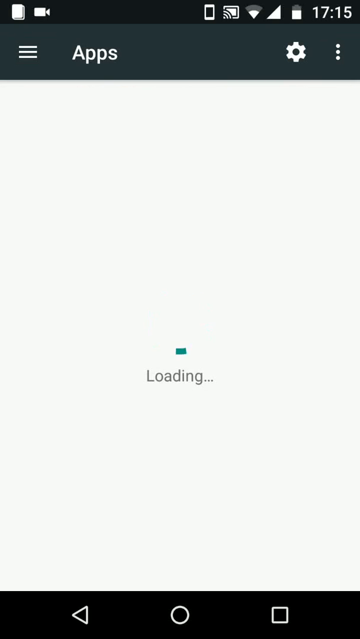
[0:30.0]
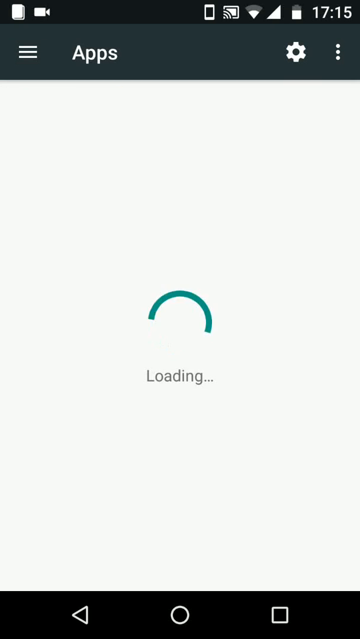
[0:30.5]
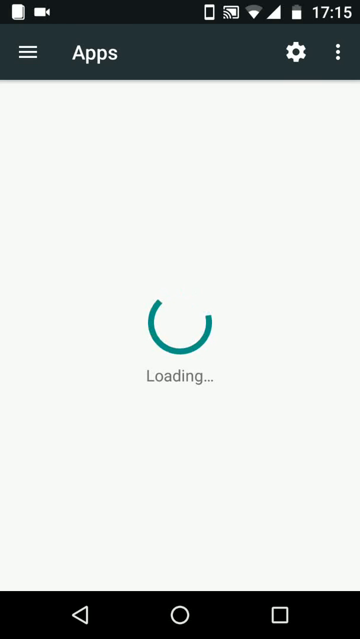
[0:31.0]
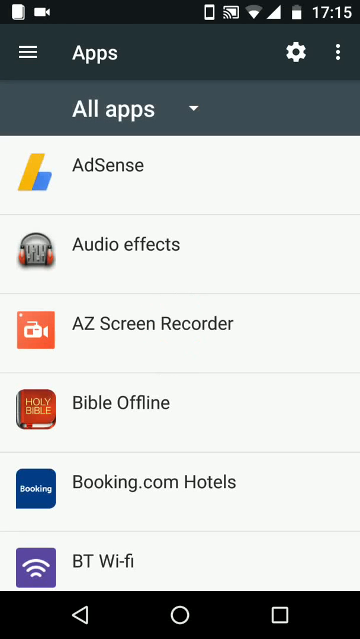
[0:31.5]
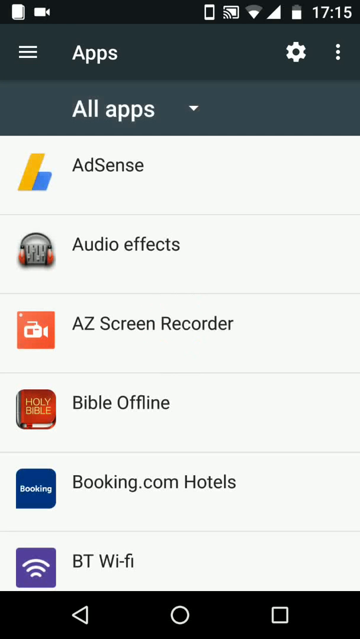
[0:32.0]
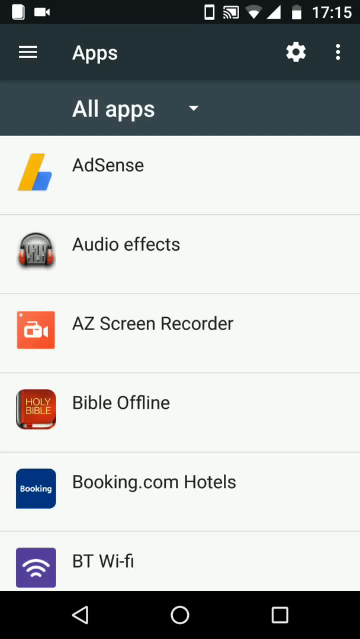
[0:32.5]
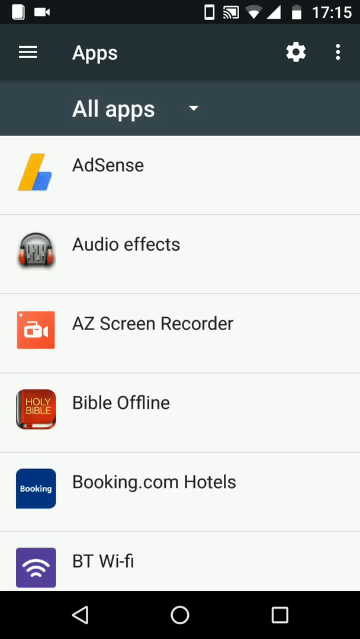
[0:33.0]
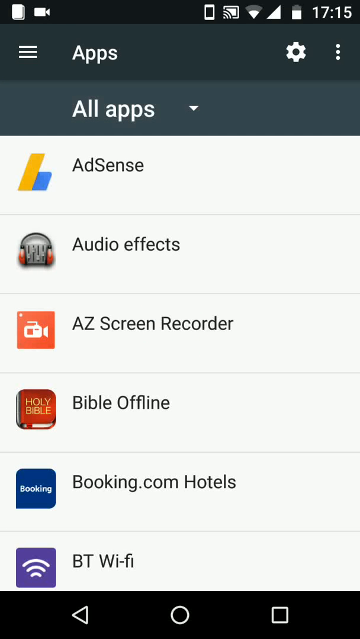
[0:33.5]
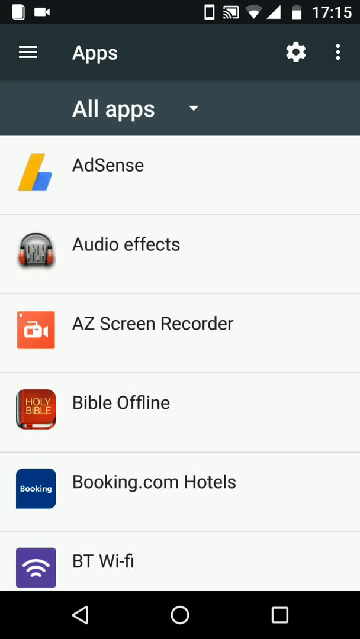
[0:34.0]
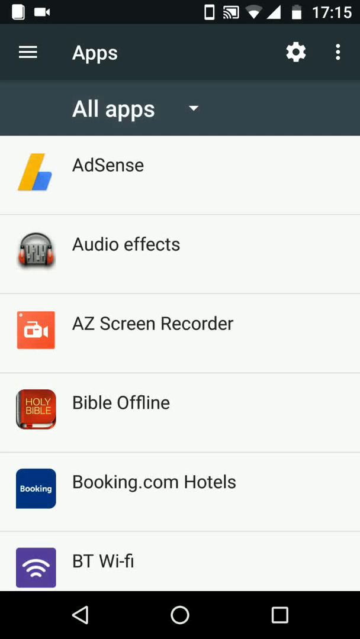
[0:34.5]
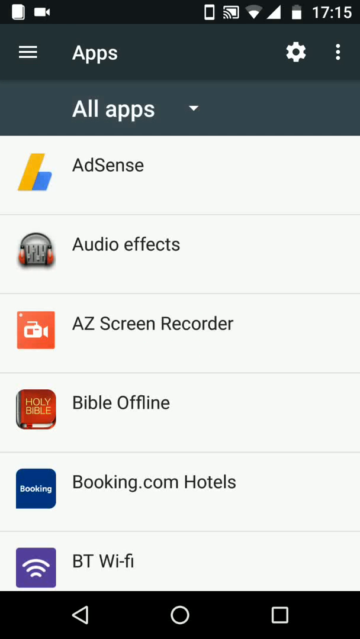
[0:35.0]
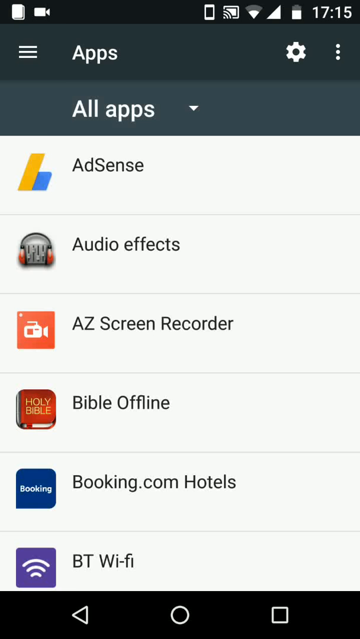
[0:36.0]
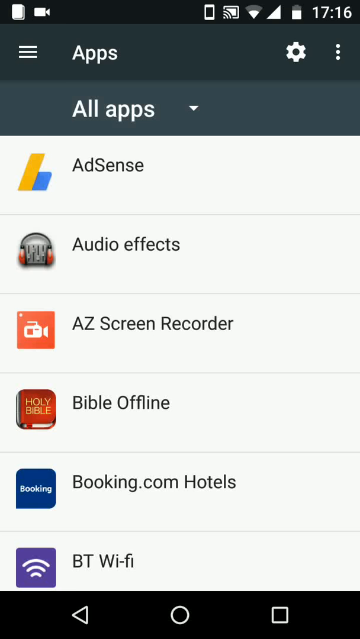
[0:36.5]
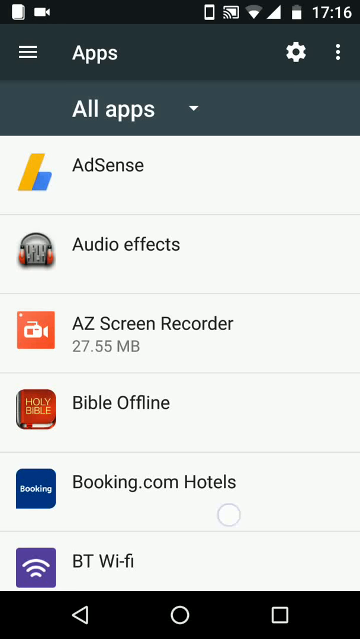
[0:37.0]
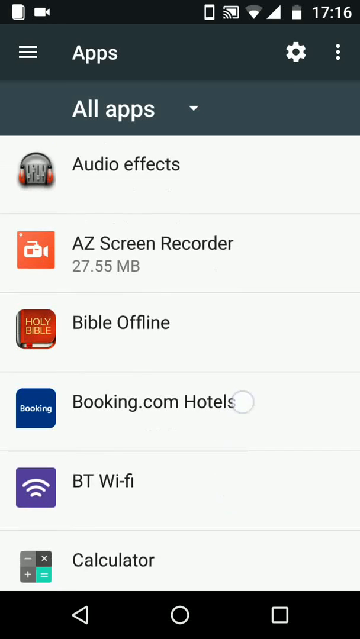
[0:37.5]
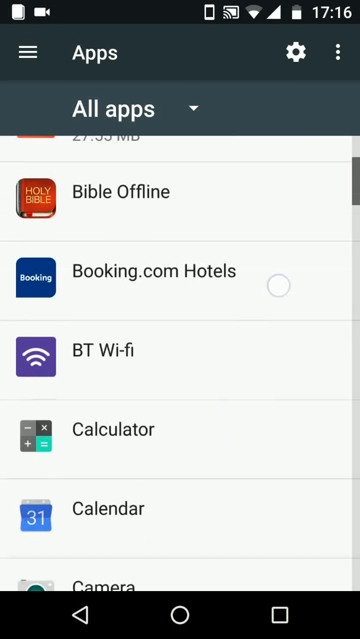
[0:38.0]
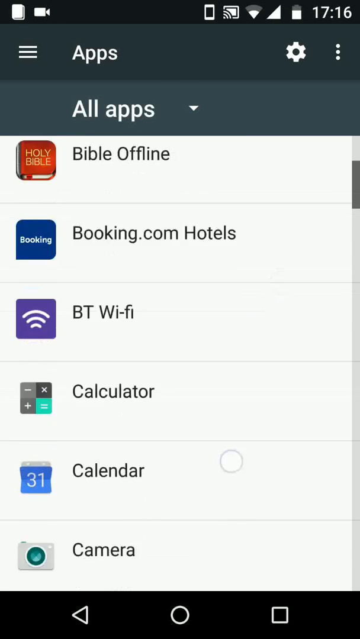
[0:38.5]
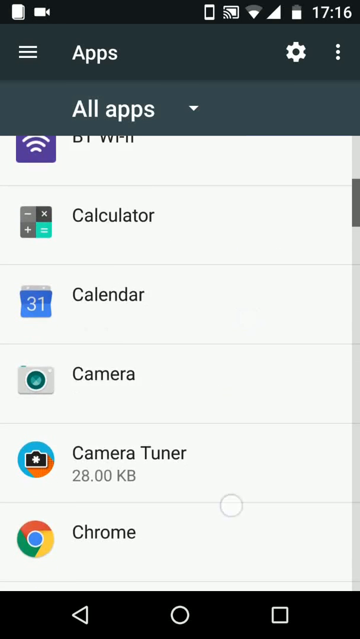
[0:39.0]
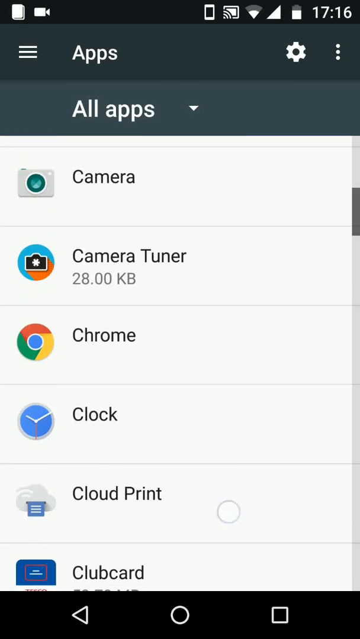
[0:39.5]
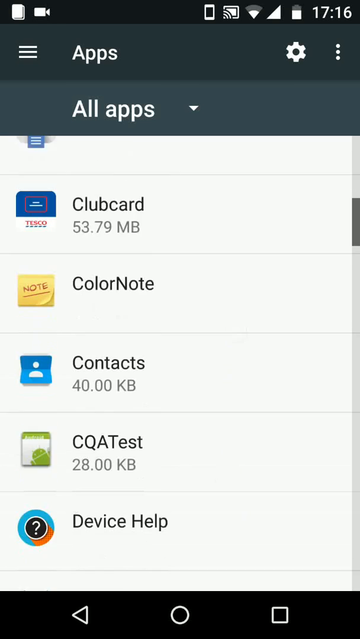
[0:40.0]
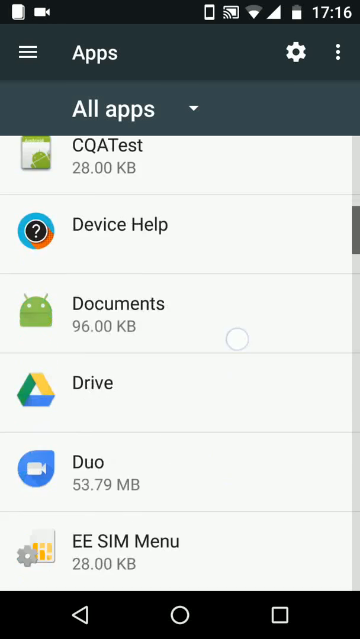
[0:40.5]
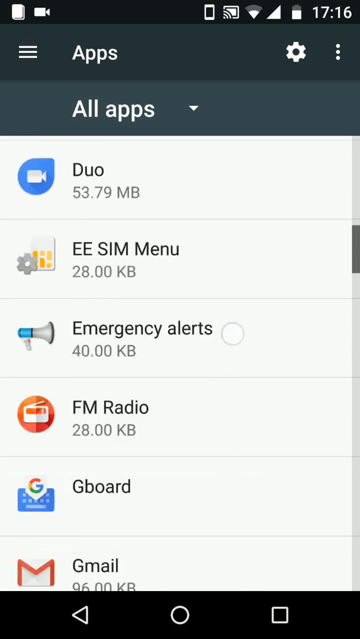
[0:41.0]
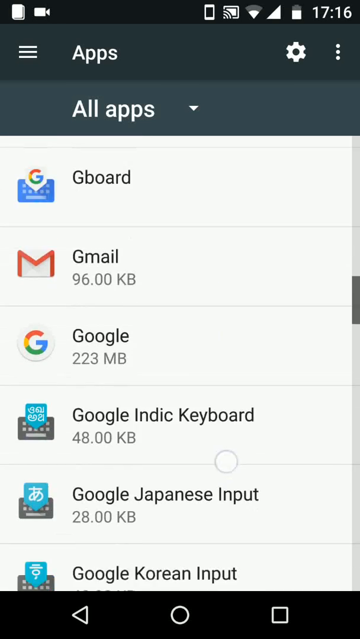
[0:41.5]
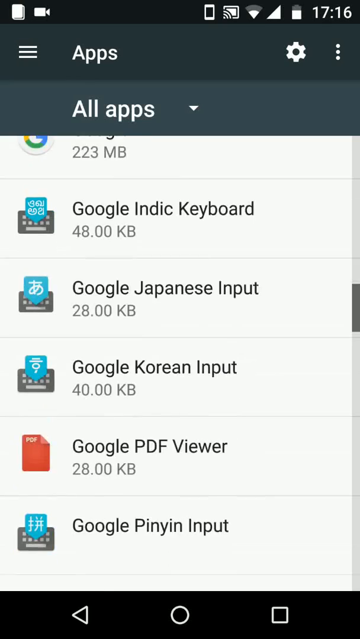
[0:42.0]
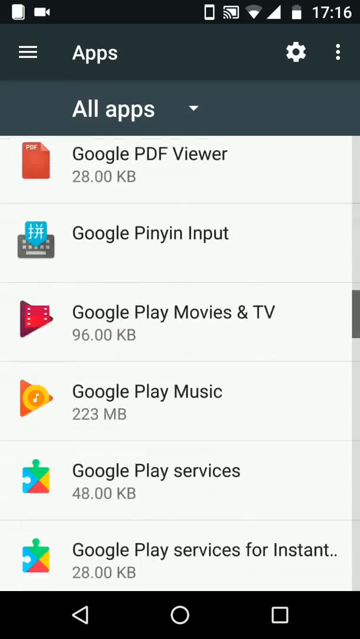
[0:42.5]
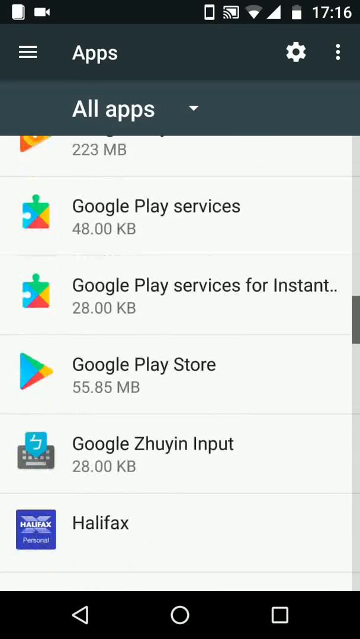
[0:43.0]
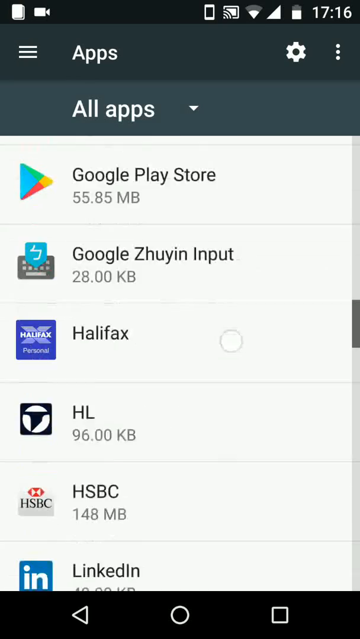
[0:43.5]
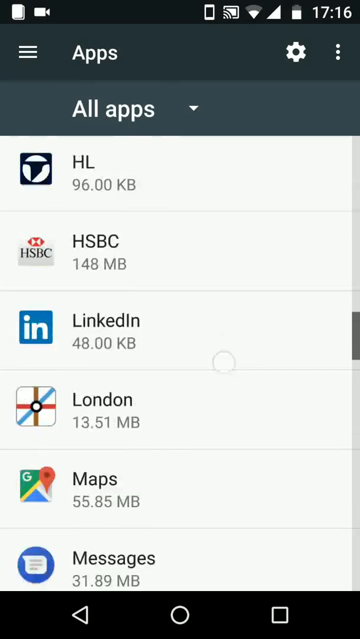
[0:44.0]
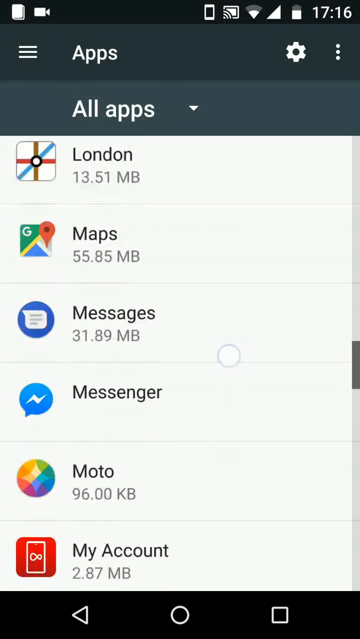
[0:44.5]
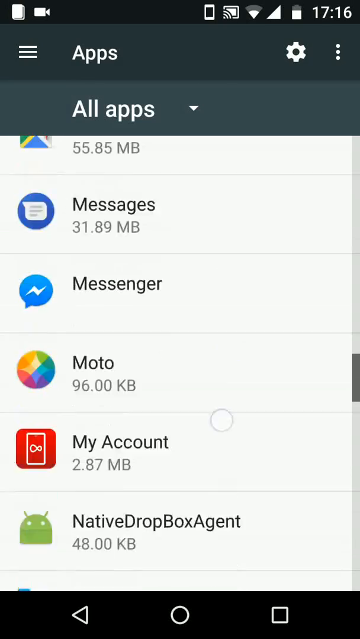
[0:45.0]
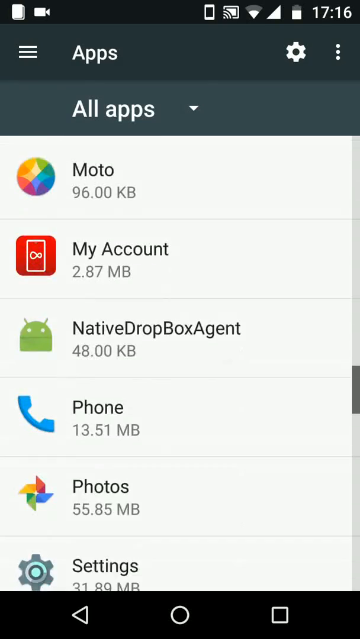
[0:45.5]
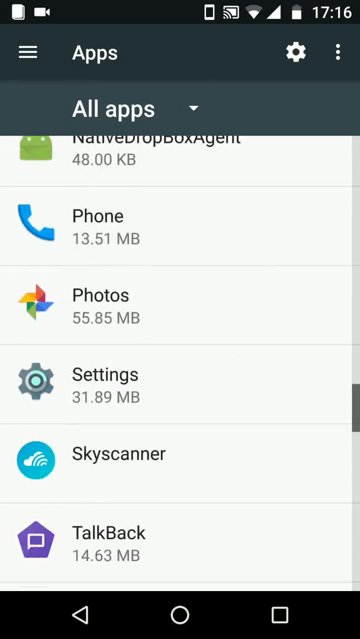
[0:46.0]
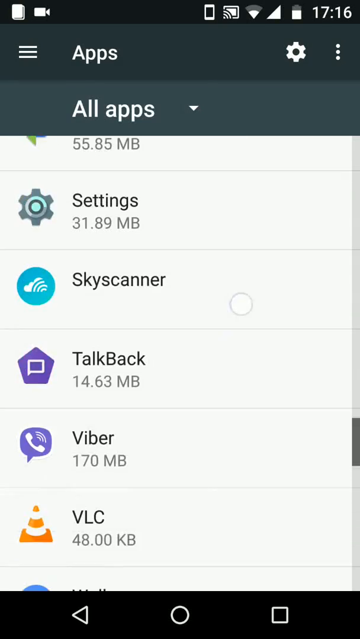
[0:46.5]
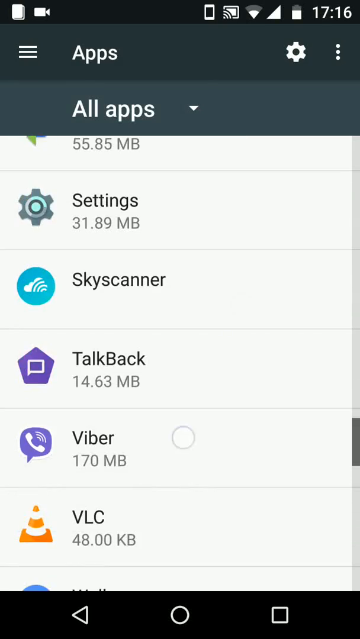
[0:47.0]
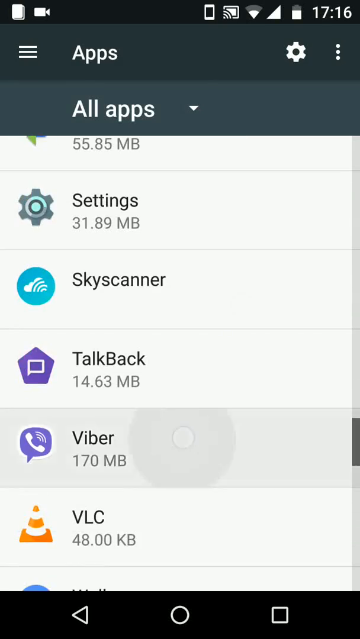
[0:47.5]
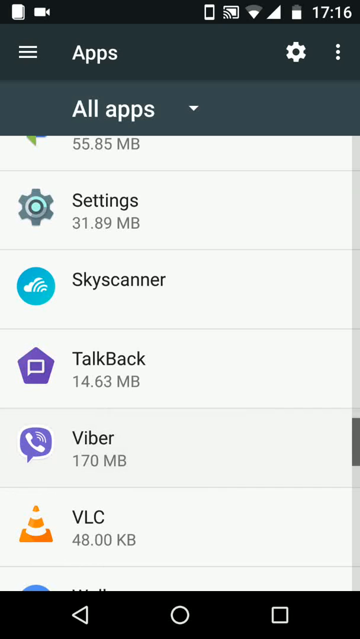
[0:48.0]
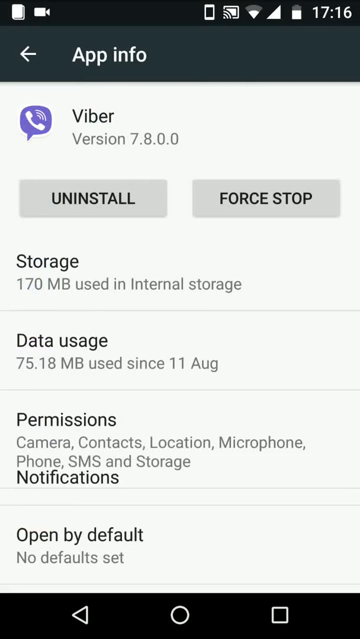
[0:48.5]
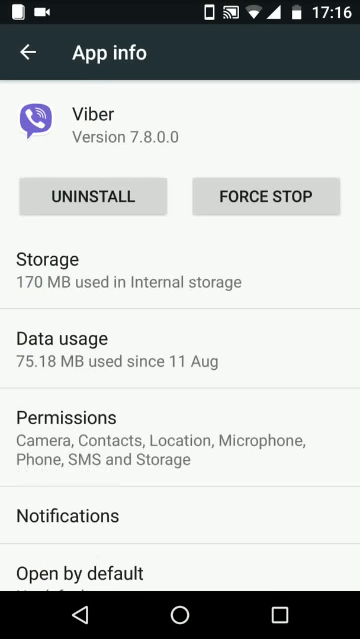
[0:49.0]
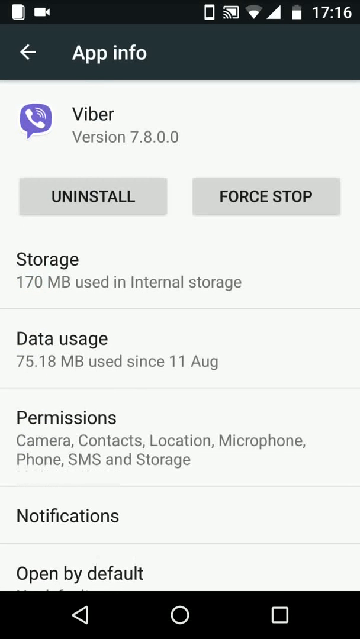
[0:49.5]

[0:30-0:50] A loading screen appears, followed by the application configuration screen inside Android. It lists all the applications installed on the system, including pre-installed system applications, and it is where settings such as clearing an app's data, resetting it or forcing it to shut down are made.